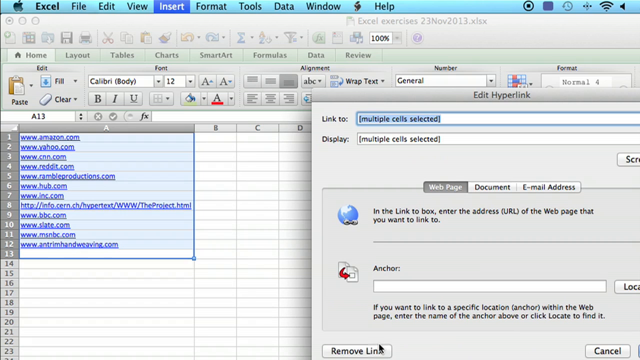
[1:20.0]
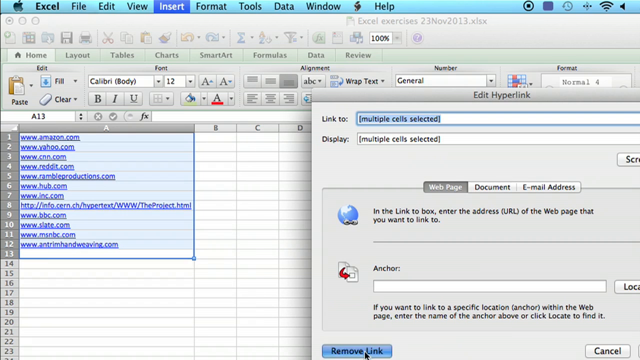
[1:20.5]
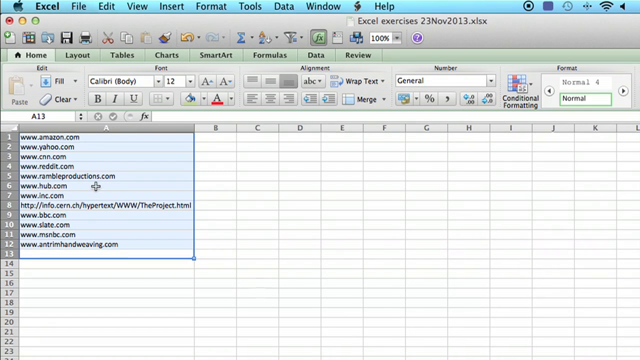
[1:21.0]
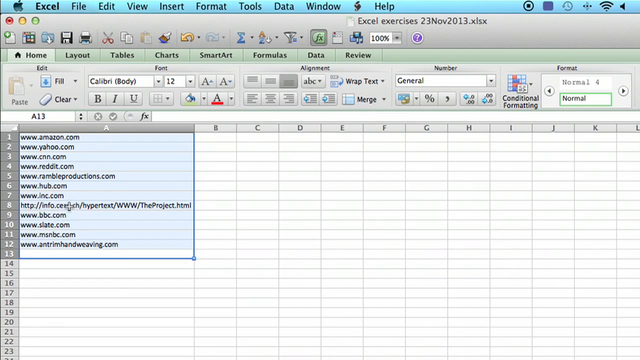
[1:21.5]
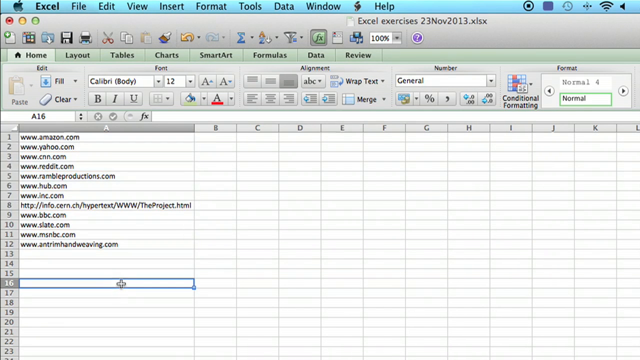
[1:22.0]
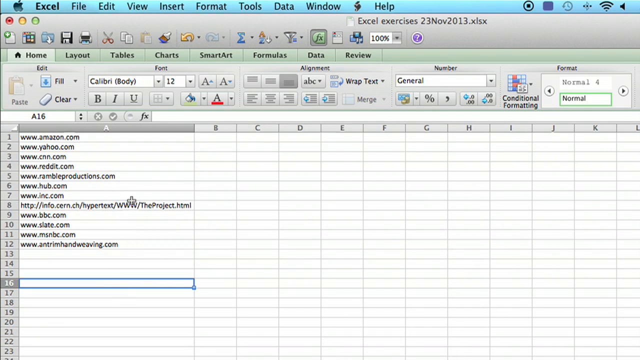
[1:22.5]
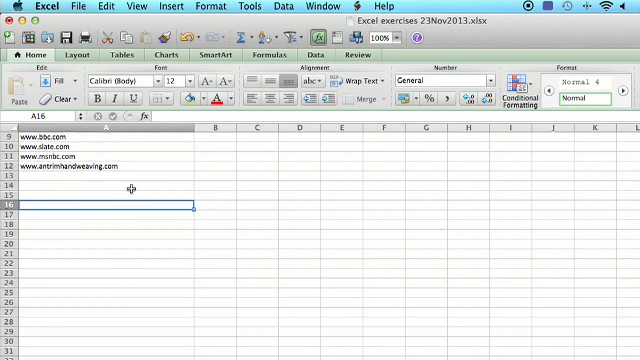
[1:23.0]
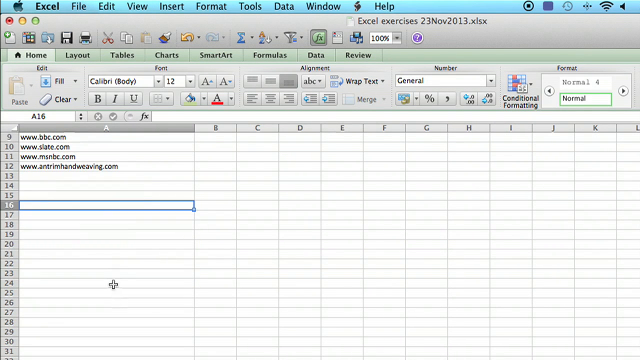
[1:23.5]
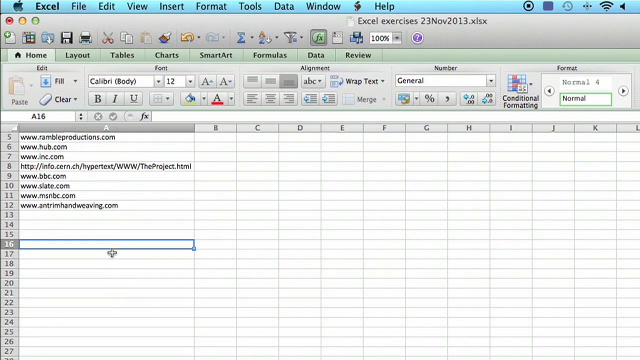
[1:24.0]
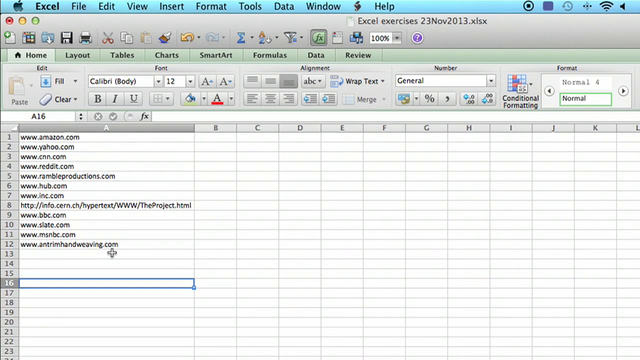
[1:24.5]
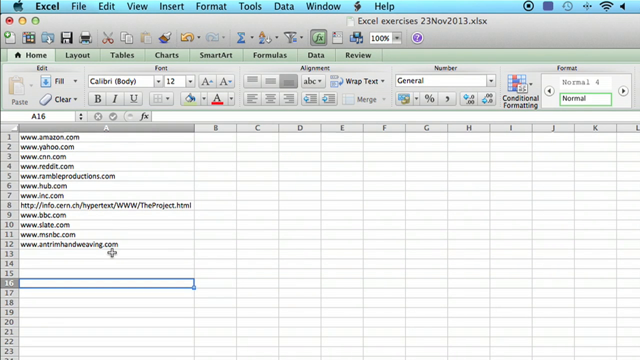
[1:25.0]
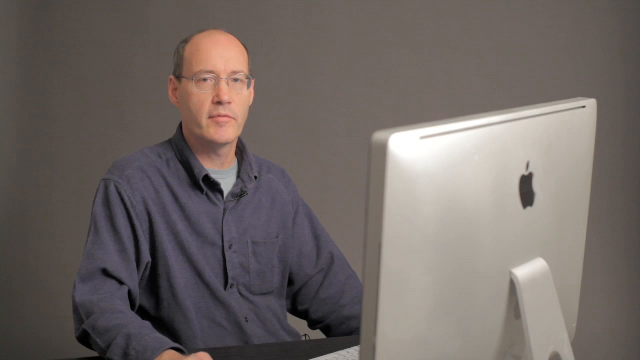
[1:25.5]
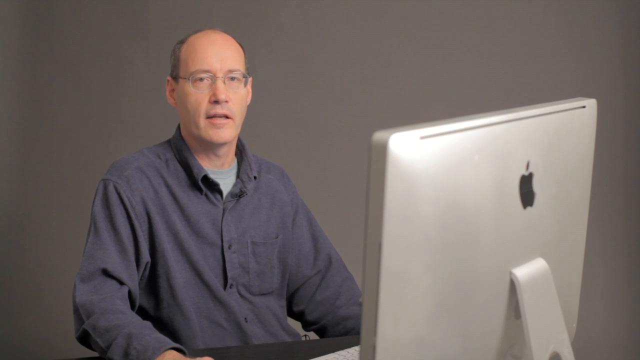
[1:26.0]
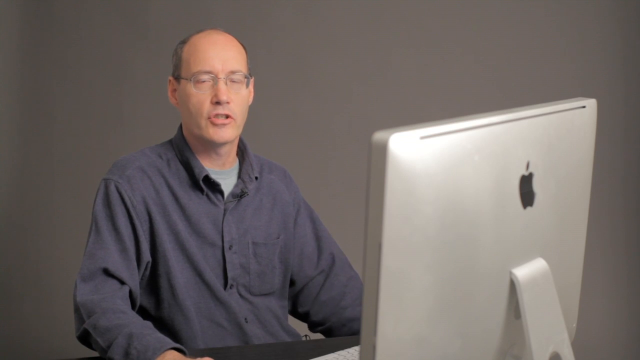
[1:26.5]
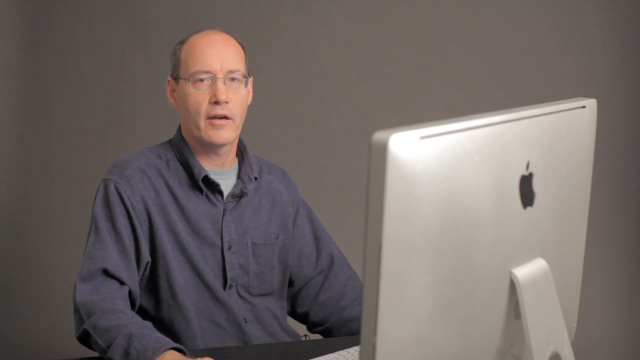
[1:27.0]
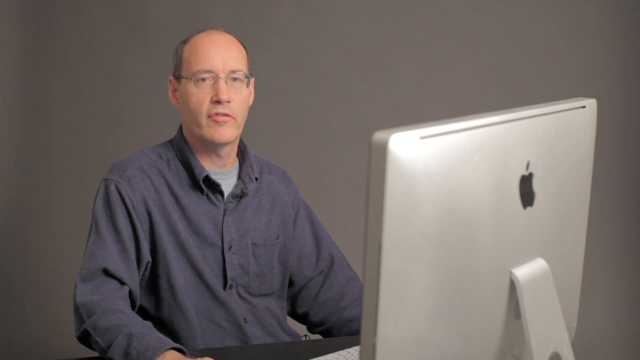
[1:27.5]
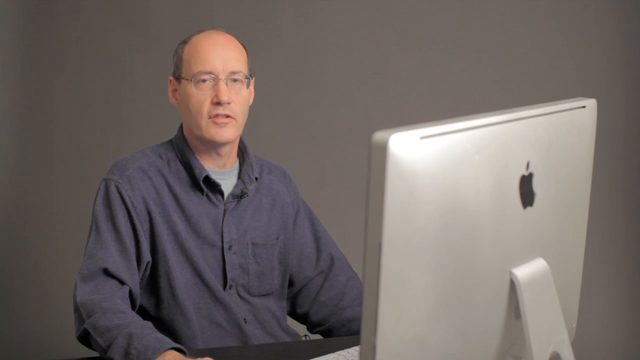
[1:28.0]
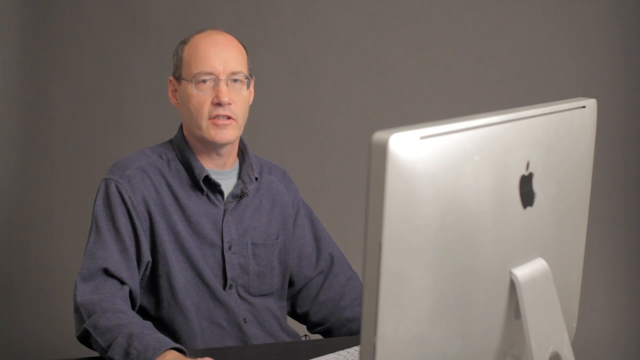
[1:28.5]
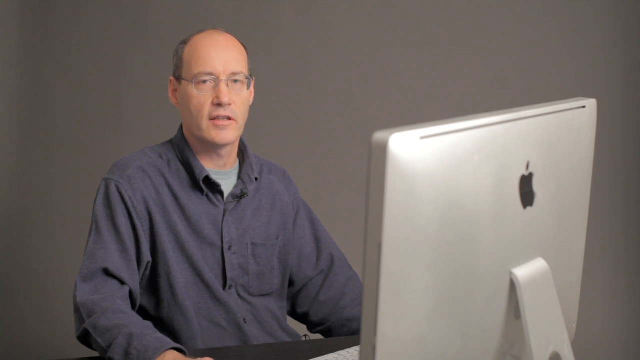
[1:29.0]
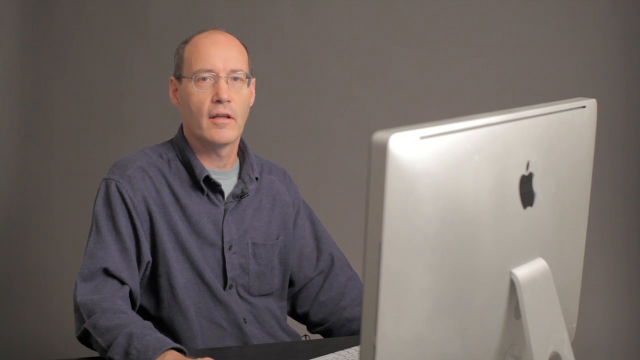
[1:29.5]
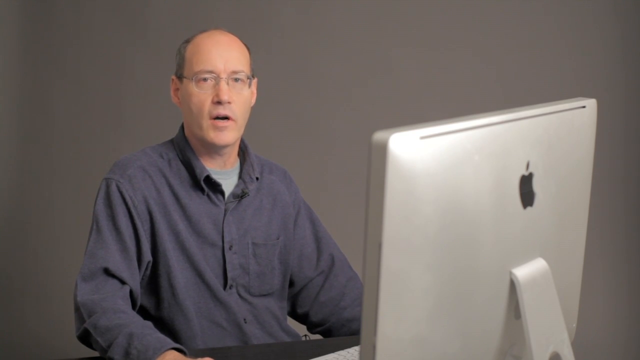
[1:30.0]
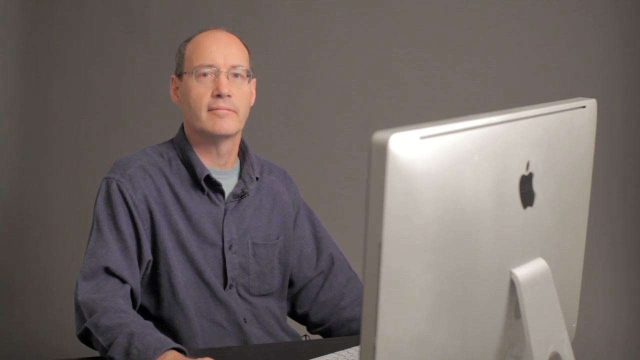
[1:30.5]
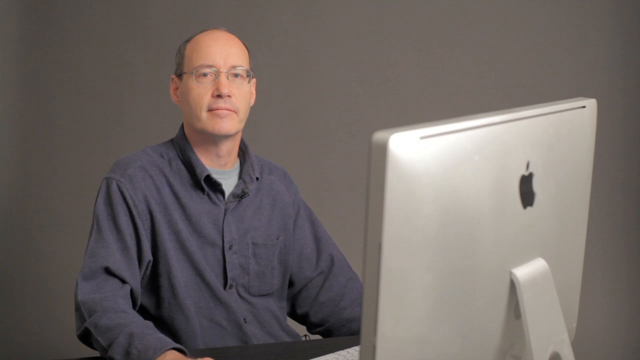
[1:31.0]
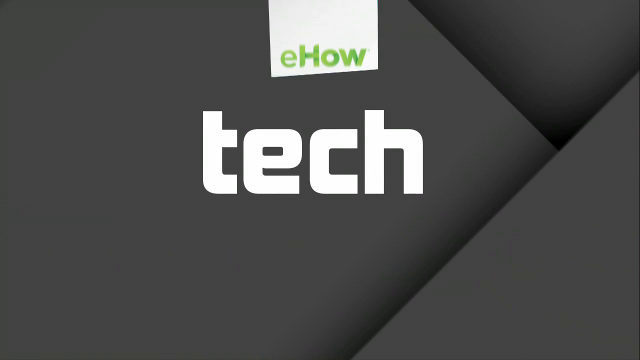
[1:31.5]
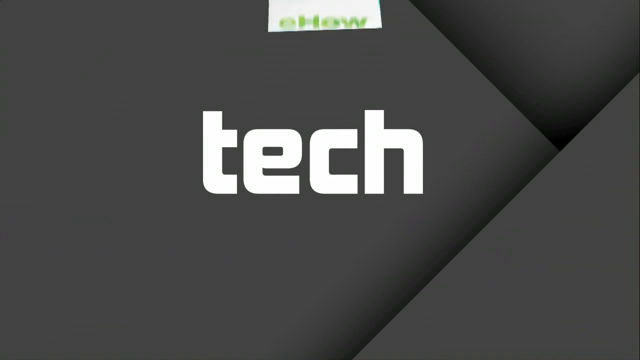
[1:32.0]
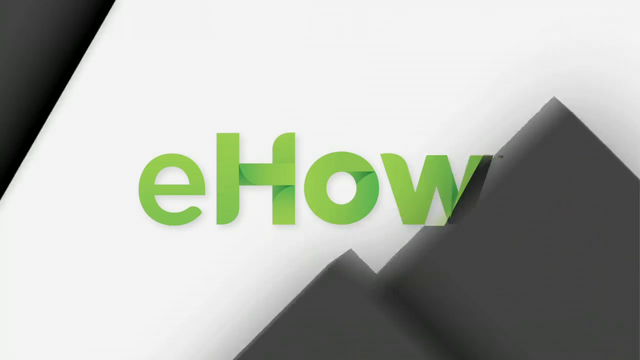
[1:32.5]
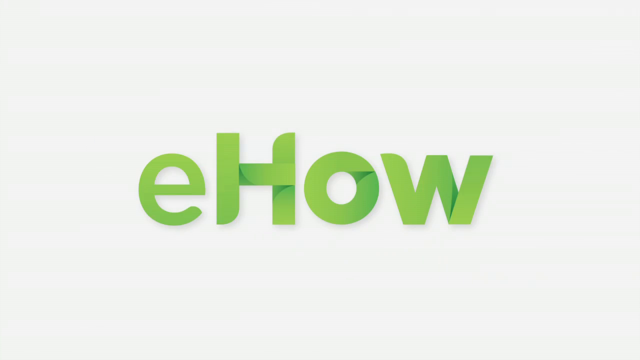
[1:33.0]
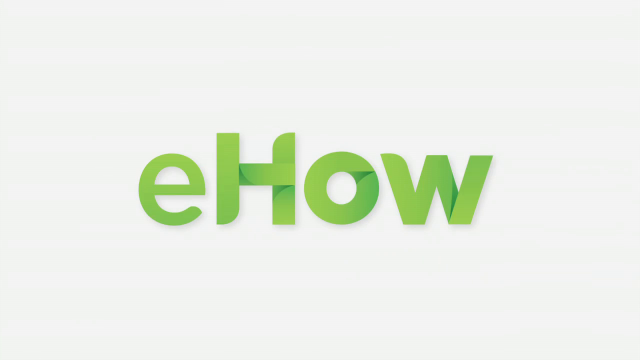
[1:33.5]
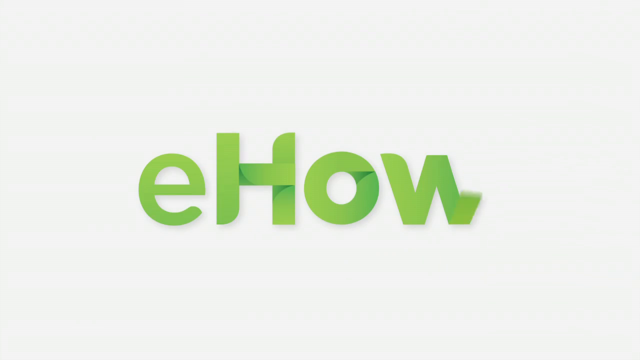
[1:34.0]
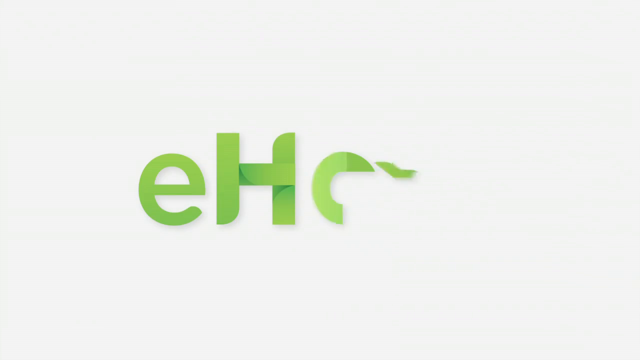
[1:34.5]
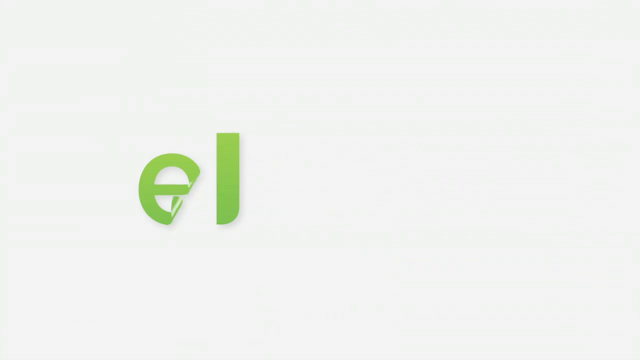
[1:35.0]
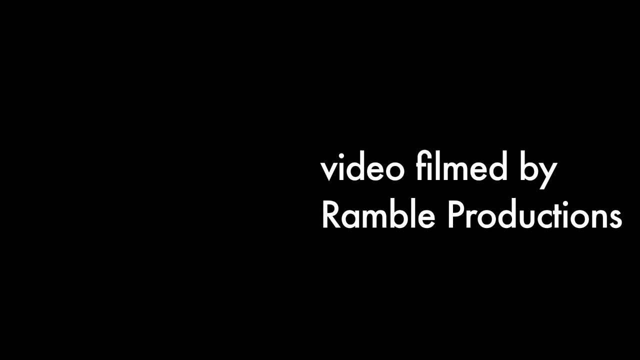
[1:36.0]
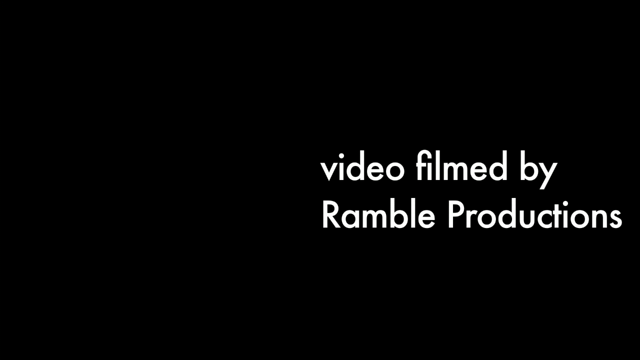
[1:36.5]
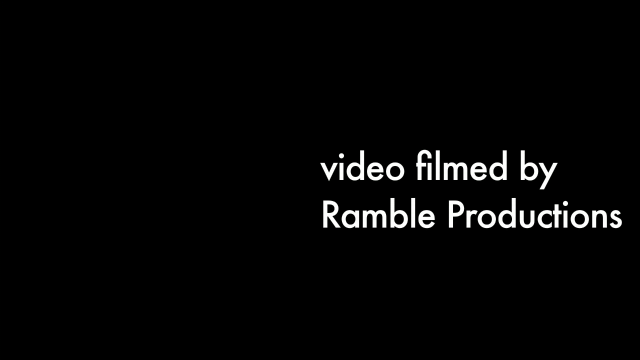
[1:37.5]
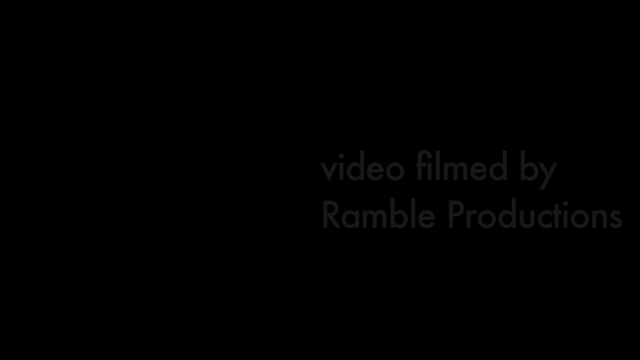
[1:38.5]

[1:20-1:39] An Excel spreadsheet is on screen, with the Apple emblem in the top left corner, suggesting it may be on an Apple tablet or a Mac, and Excel right beside it. The Insert tab is highlighted, and a list of 12 URLs in the spreadsheet is highlighted all in one box. An edit hyperlink settings box is open over the top, with the linked-to and display fields both reading "multiple cells selected". The author scrolls up and down the page, then the scene shifts to the author, the engineer, talking about the spreadsheet. Finally it goes back to eHow: a solid white page with a green eHow symbol that disappears in the reverse order of how it appeared.